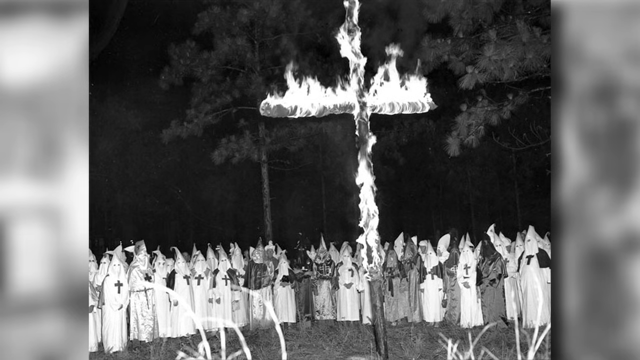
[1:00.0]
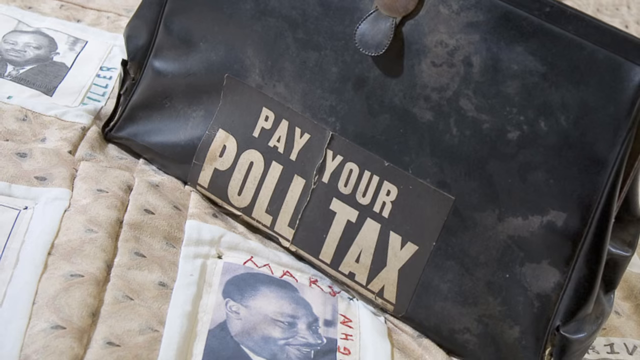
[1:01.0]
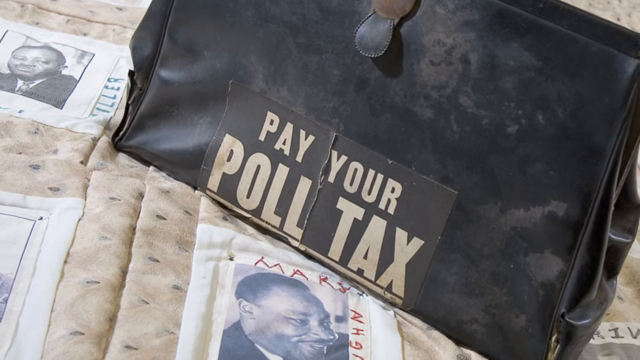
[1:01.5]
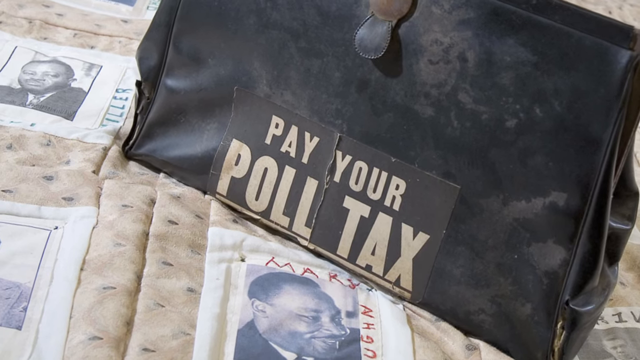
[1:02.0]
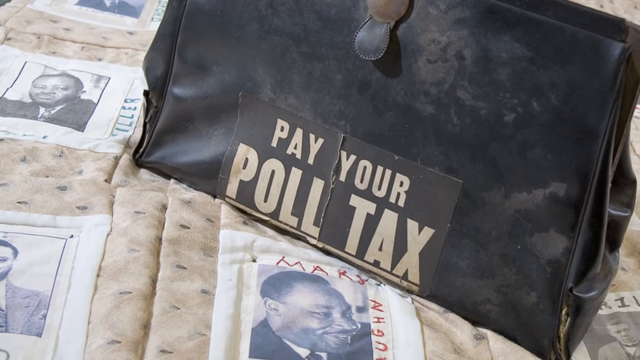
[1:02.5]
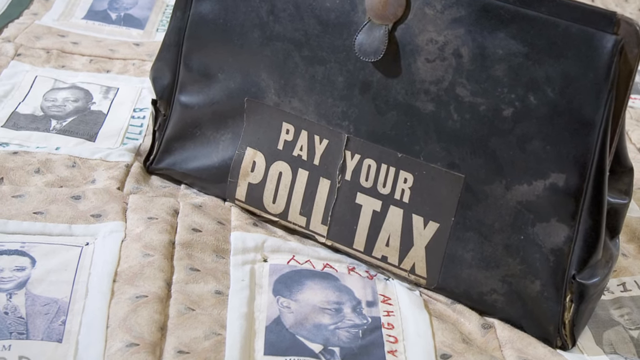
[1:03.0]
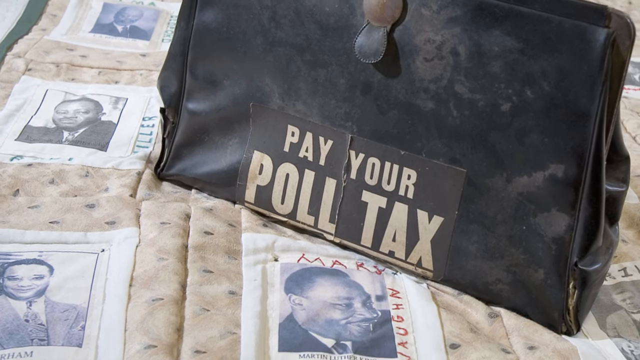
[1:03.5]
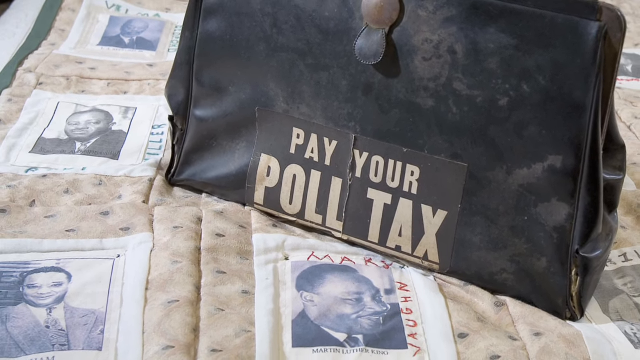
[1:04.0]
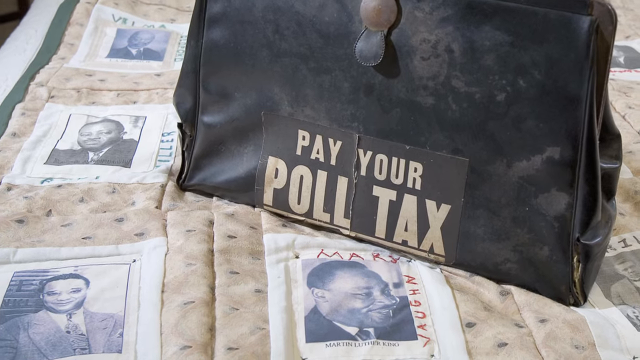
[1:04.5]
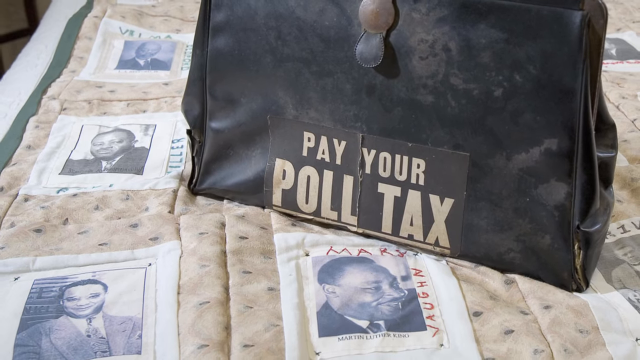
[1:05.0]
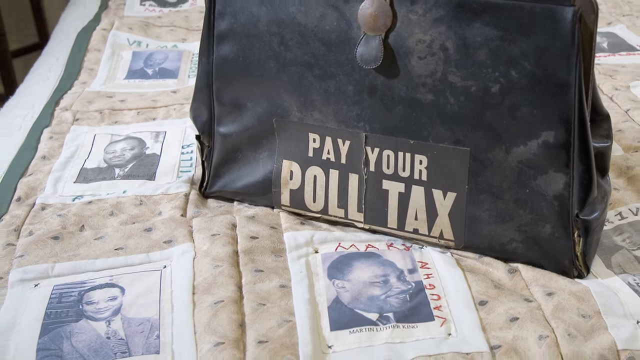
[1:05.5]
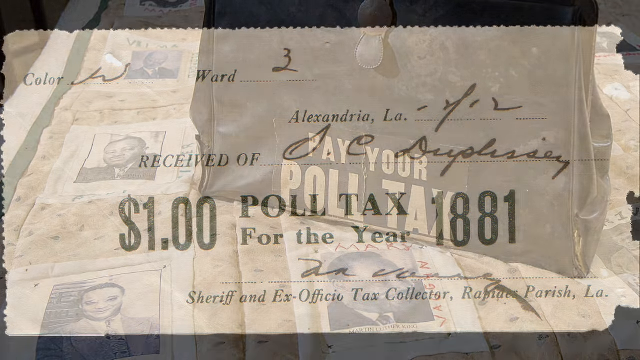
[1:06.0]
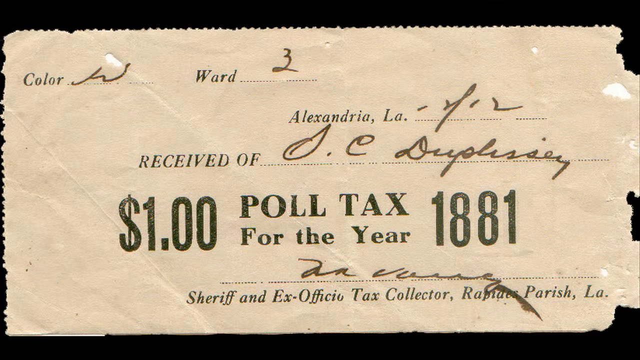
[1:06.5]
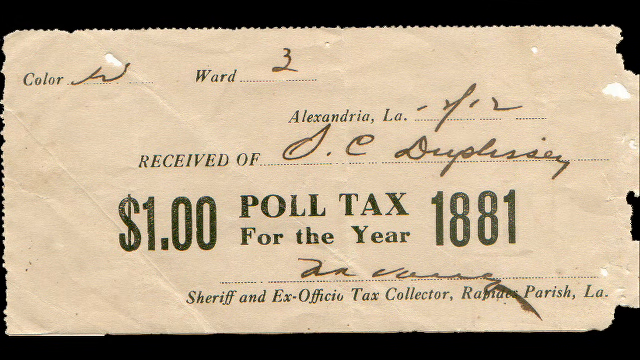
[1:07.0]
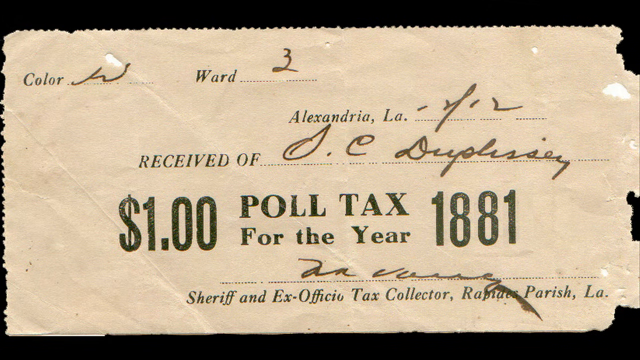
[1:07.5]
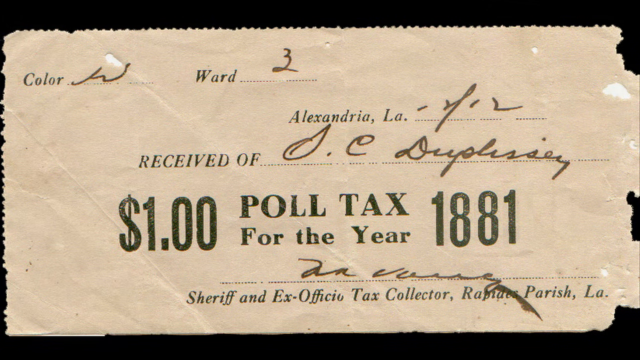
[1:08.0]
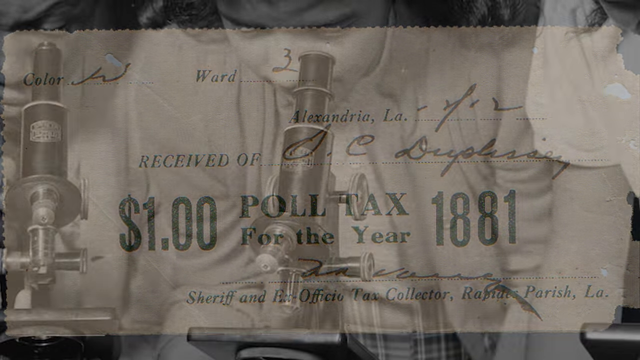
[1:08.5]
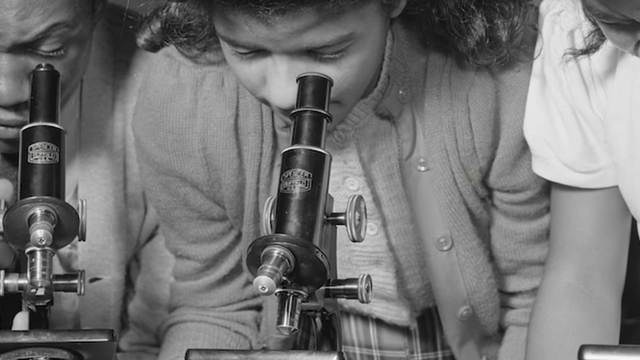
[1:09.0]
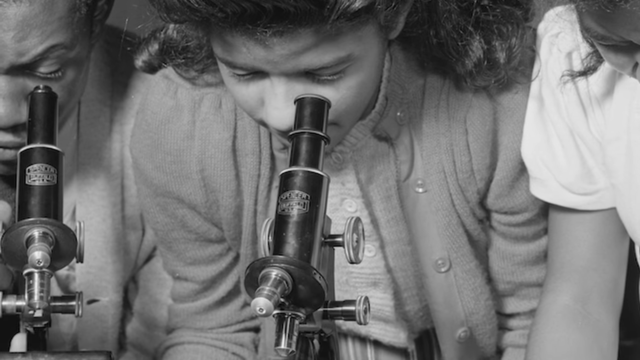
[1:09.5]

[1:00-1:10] A large group of KKK members stands by a huge cross on fire outside. Next, text about "pay your poll tax" appears on some type of briefcase, with a face that looks like Martin Luther King and many pictures of African American faces underneath it. A poll tax receipt follows with text including "$1.00 poll tax", "poll tax for the year 1881", "received", "sheriff and ex officio tax collector" and "Rapids Parish, Louisiana". African American schoolgirls are then shown looking through a microscope.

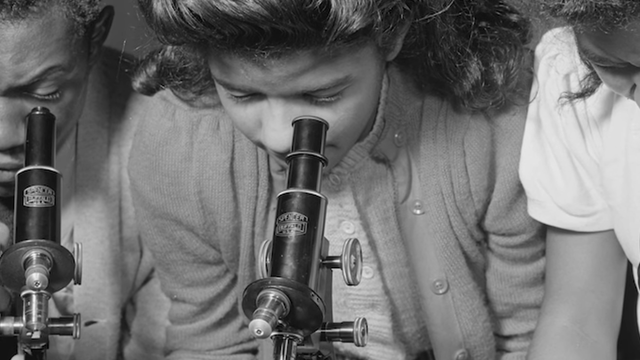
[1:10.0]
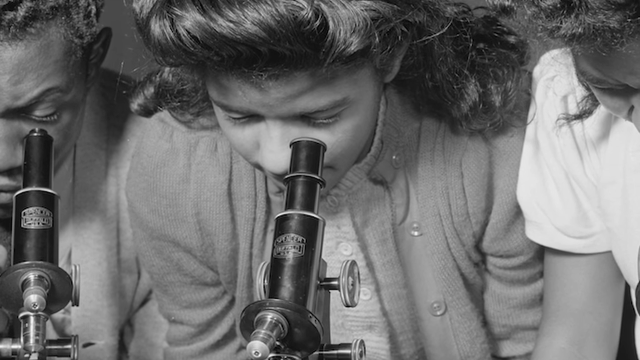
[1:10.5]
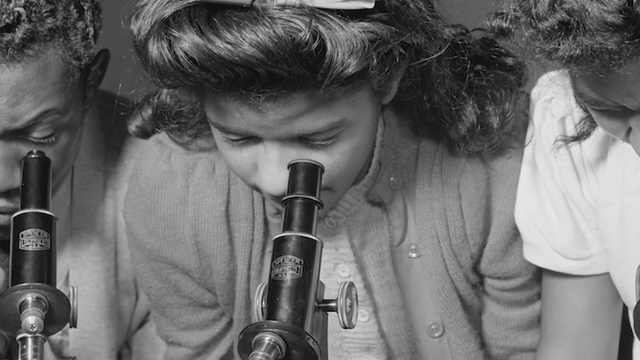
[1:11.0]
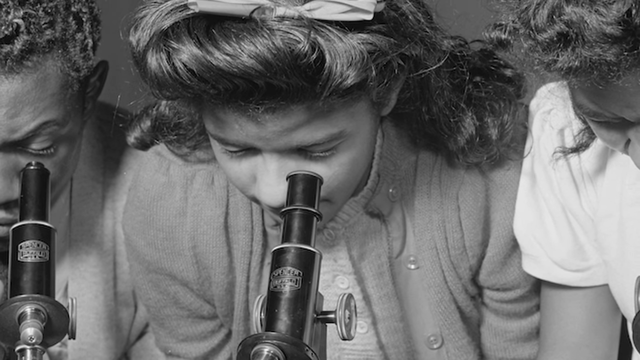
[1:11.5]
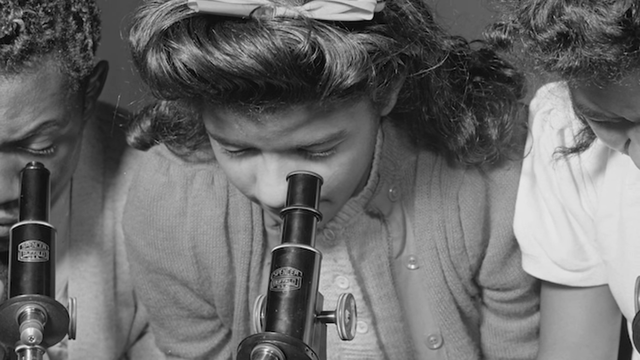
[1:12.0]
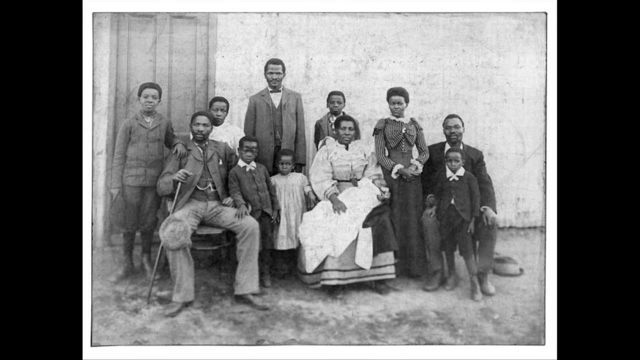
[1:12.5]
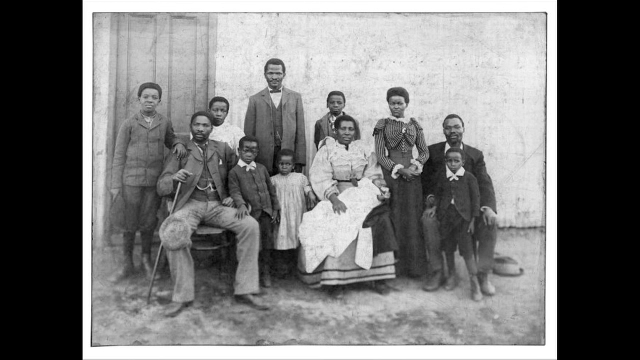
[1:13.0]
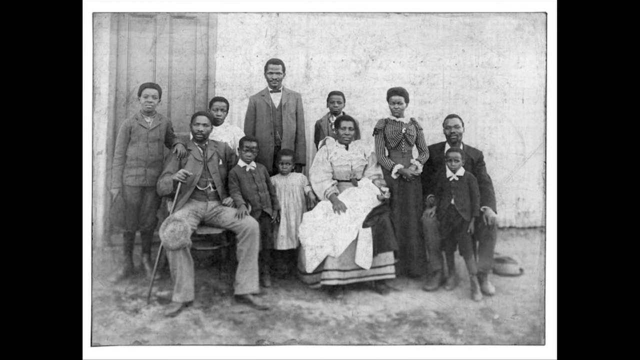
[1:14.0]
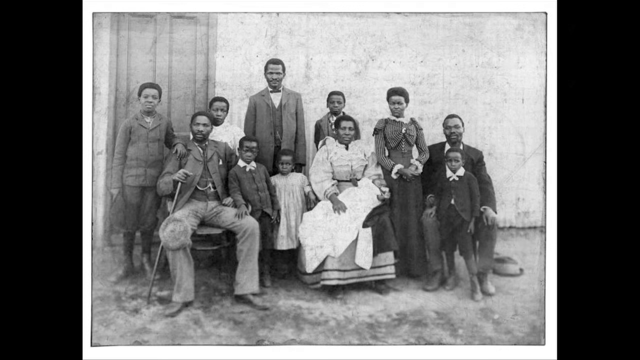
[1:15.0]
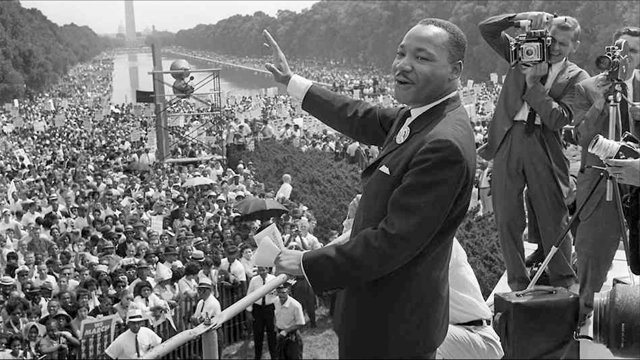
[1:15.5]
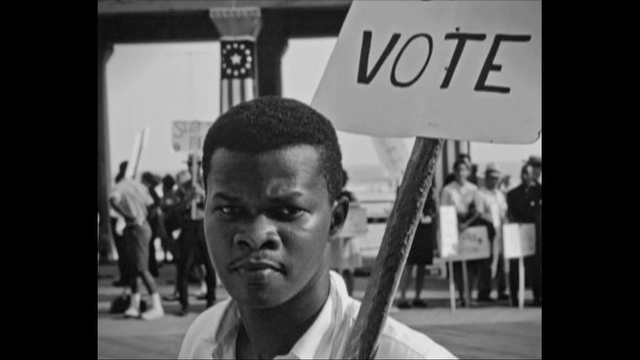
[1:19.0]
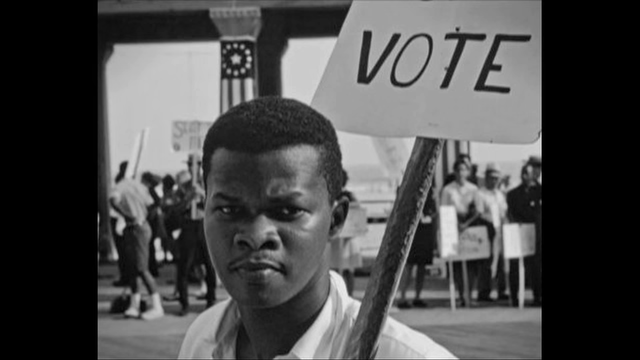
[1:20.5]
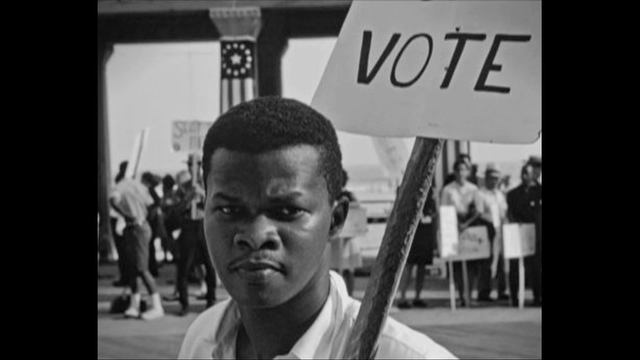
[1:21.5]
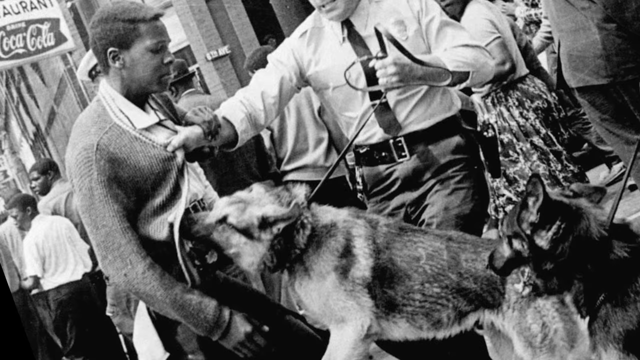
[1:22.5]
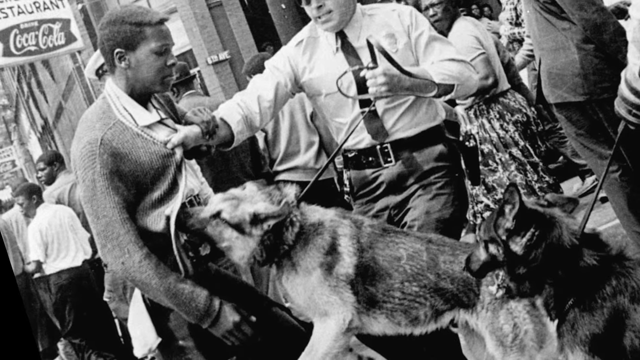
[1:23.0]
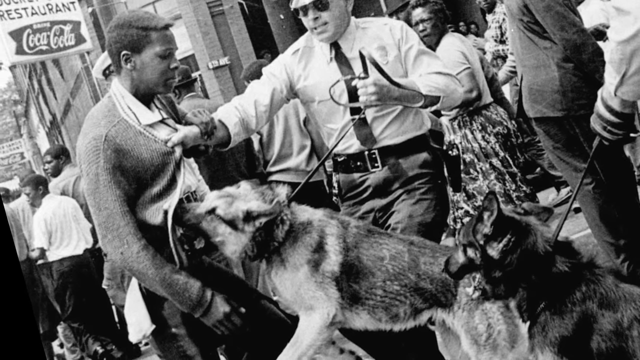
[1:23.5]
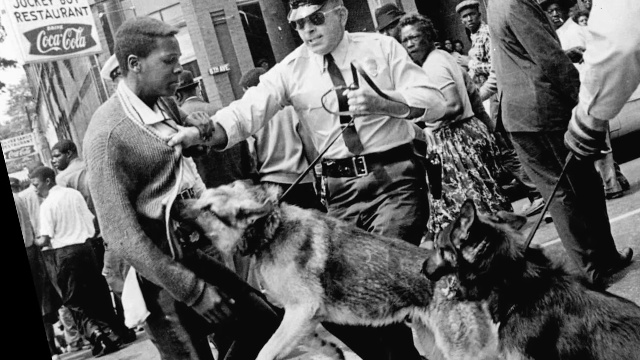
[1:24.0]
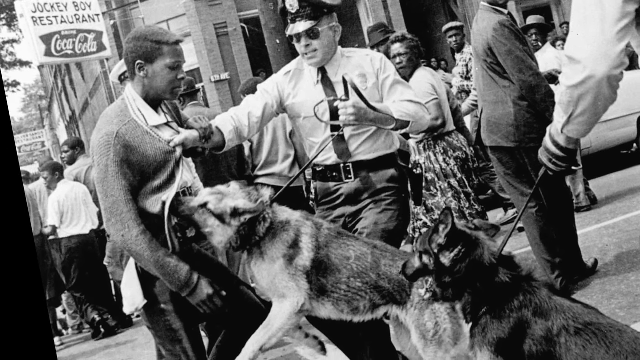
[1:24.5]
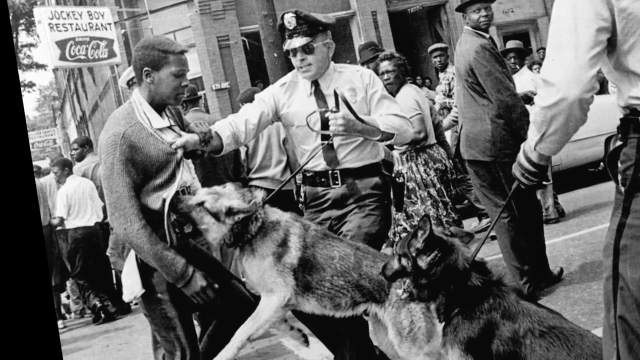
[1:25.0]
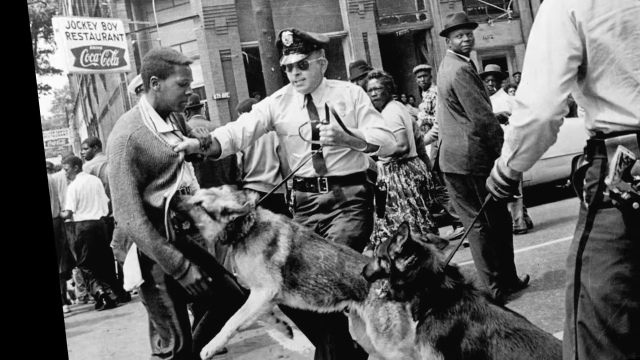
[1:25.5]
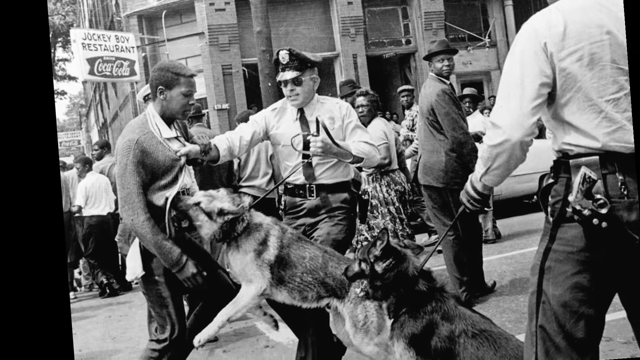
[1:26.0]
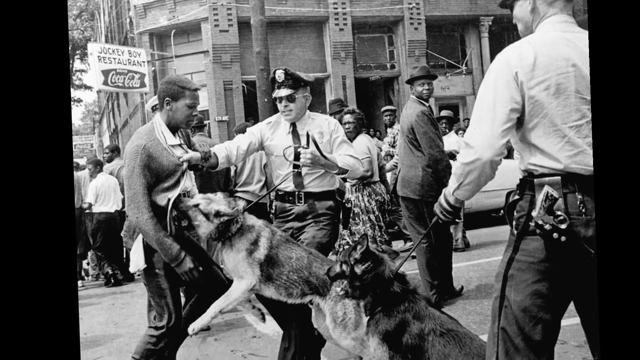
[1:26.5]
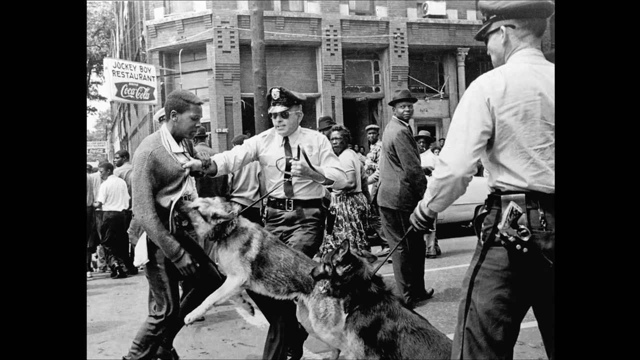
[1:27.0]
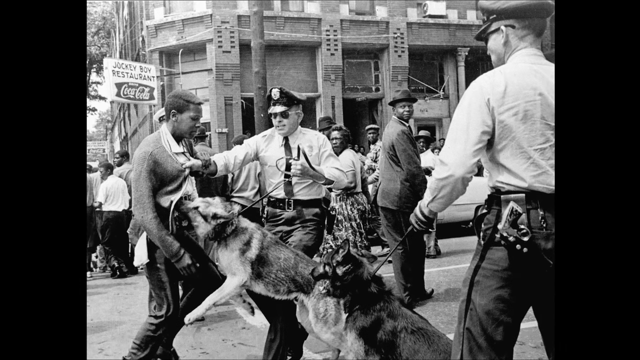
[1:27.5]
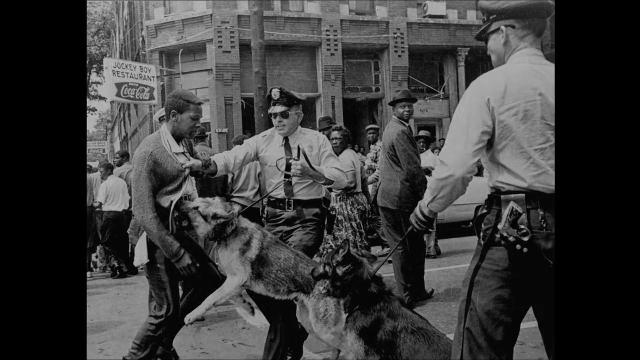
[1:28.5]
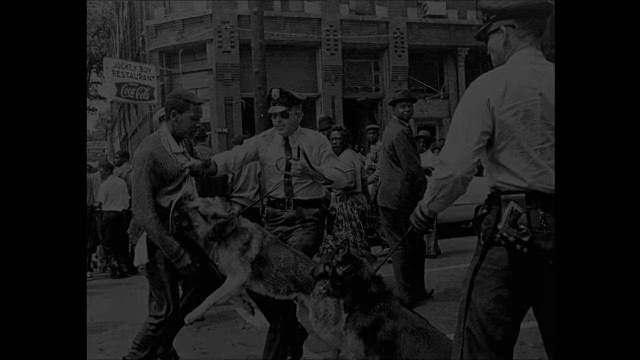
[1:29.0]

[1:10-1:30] African American schoolgirls look through a microscope. A black-and-white photo shows an African American family of men, women and kids. Martin Luther King stands at a podium, apparently giving his "I have a dream" speech, while many people hold up cameras taking photos and recording, and thousands of people fill the audience. A black-and-white picture shows an African American man holding up a sign that says "vote". Dogs and white police officers have their hands on an African American person, and the dogs look like they are about to bite the person.